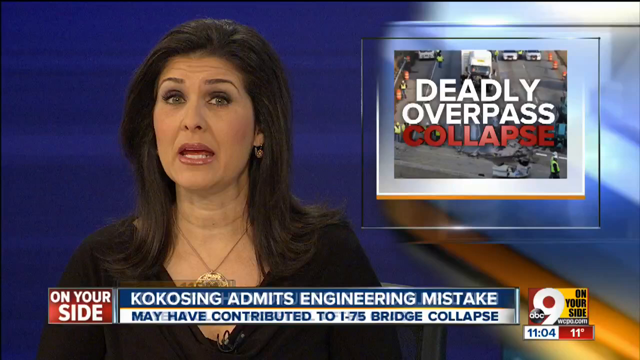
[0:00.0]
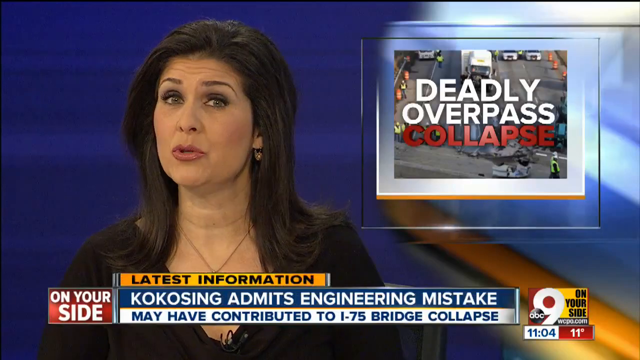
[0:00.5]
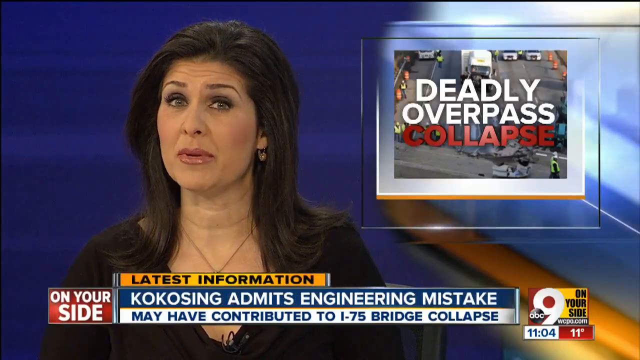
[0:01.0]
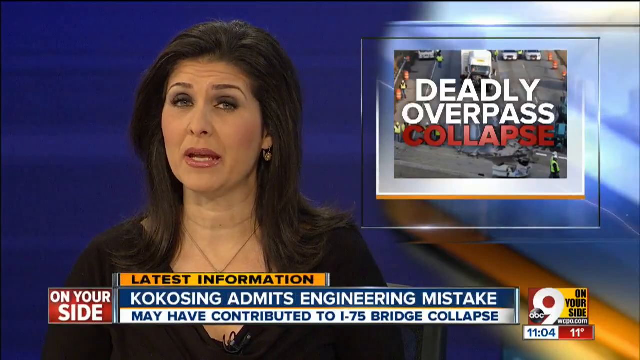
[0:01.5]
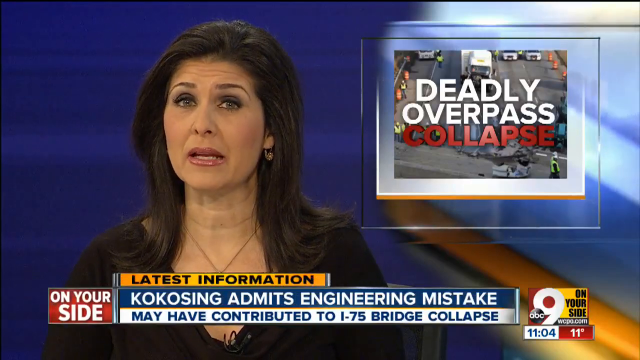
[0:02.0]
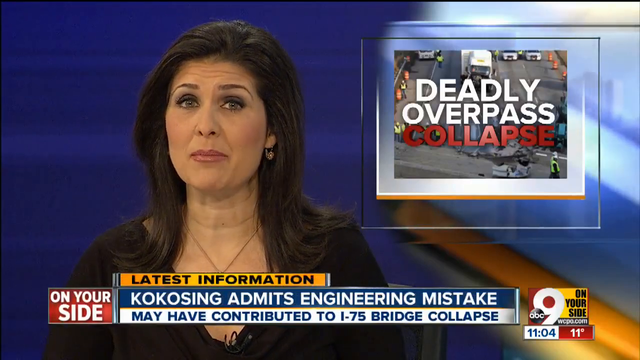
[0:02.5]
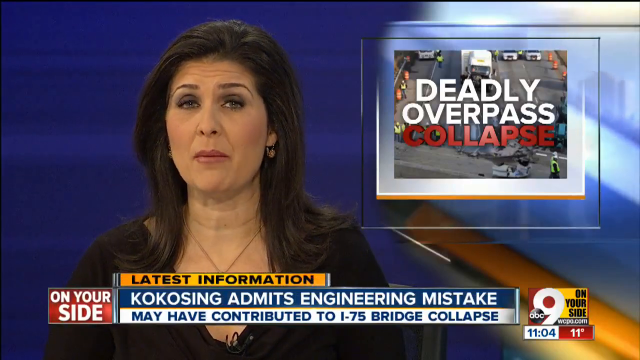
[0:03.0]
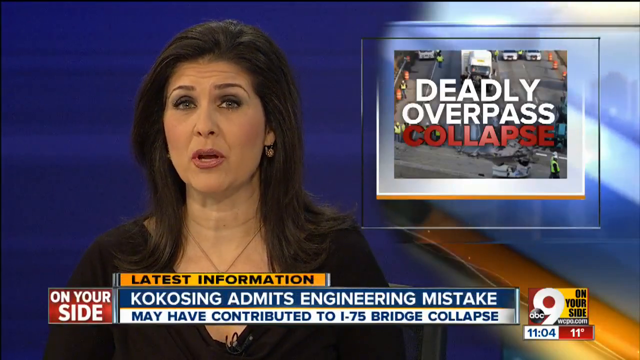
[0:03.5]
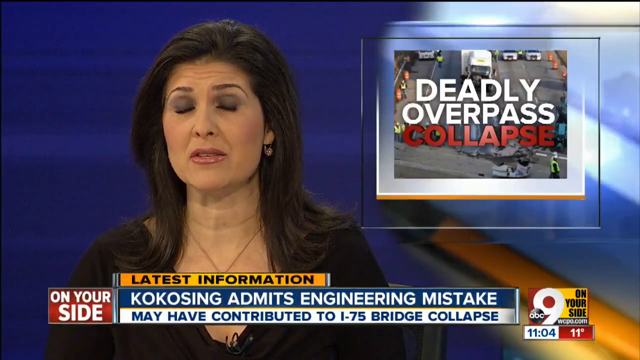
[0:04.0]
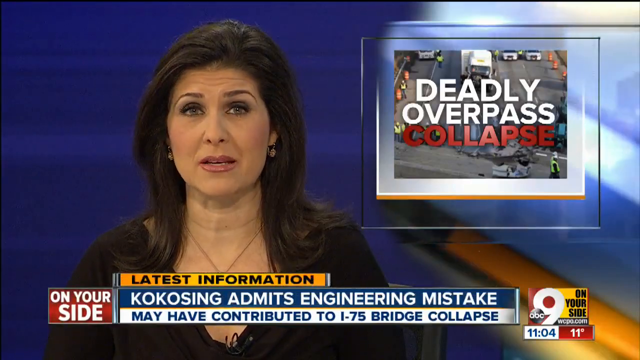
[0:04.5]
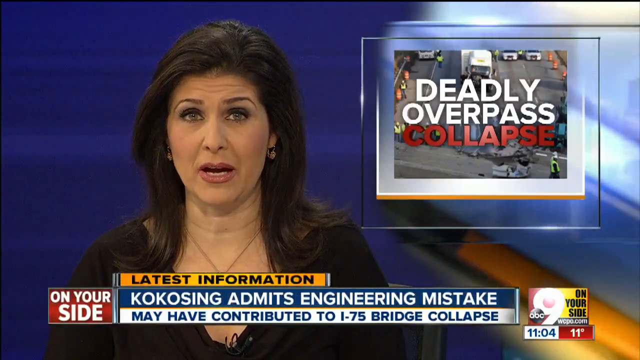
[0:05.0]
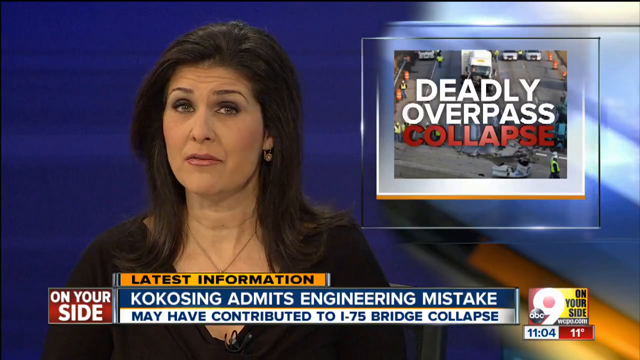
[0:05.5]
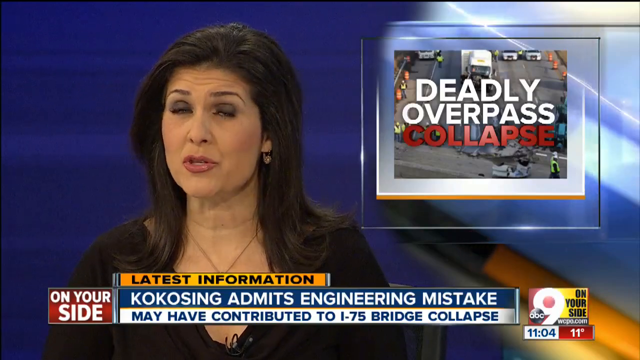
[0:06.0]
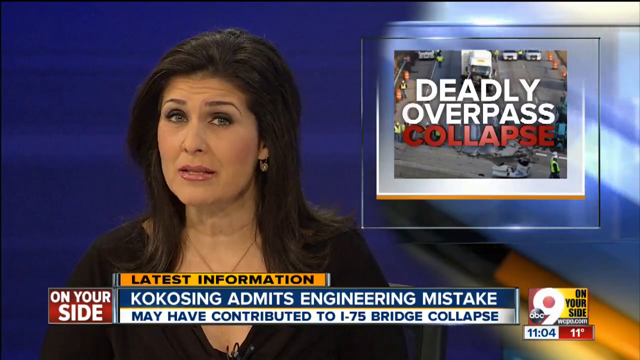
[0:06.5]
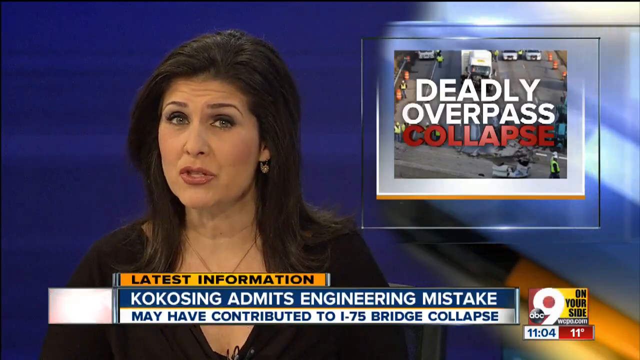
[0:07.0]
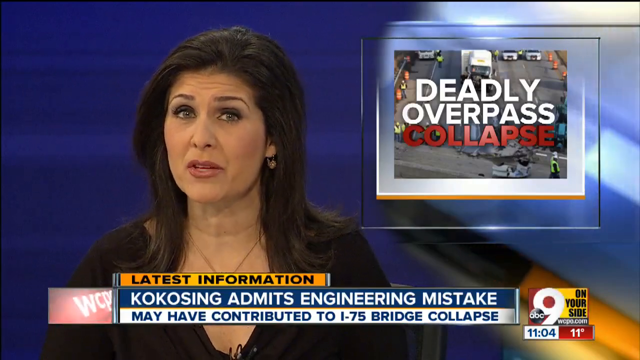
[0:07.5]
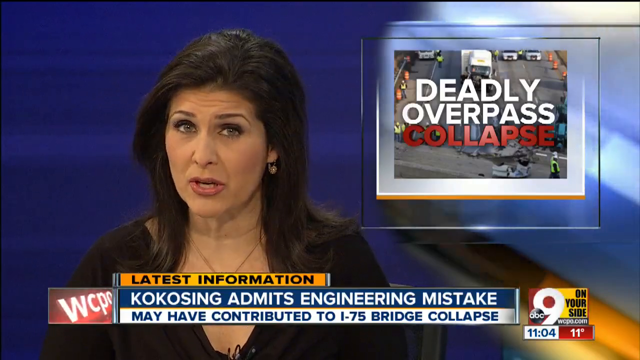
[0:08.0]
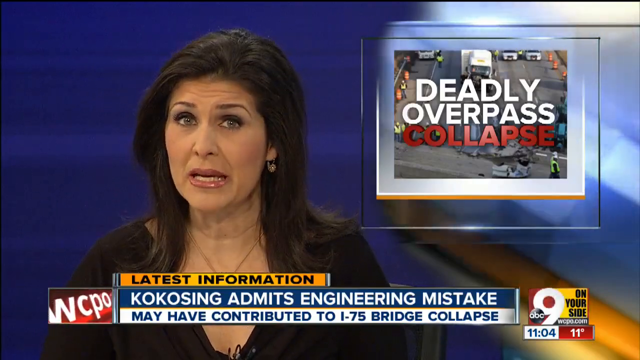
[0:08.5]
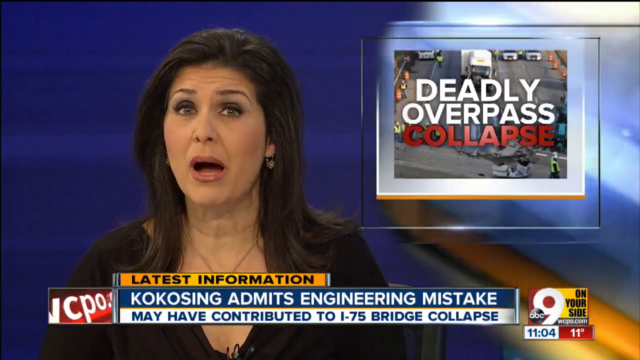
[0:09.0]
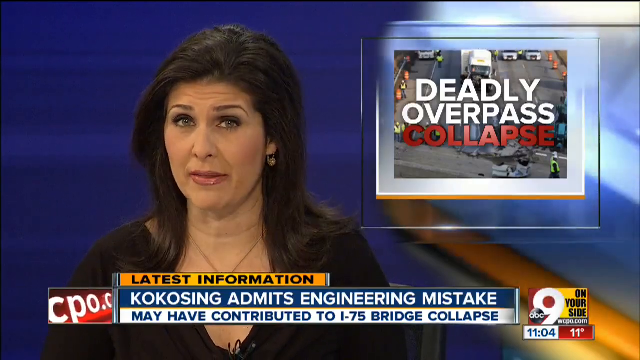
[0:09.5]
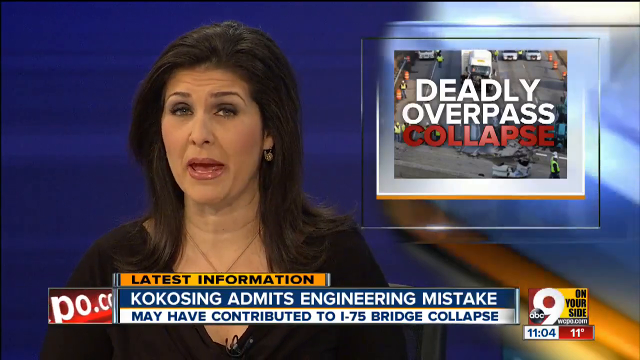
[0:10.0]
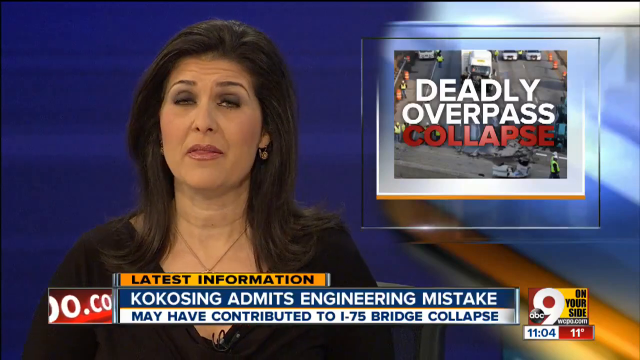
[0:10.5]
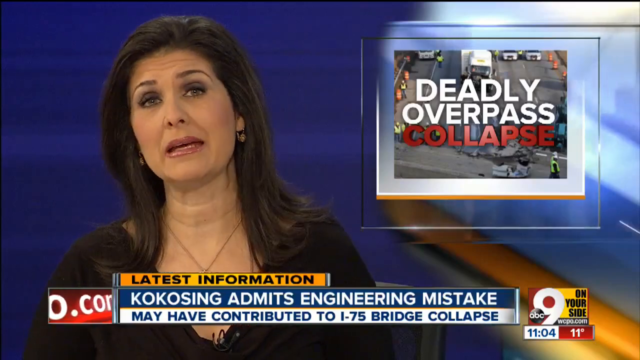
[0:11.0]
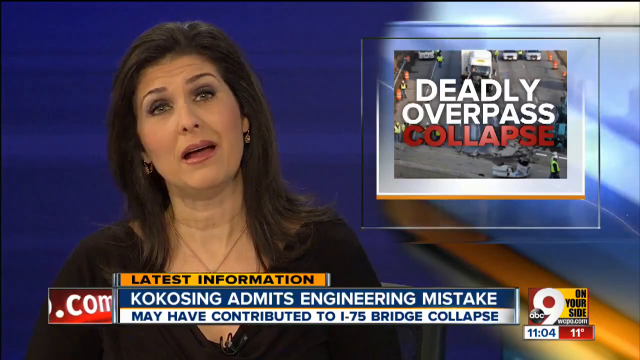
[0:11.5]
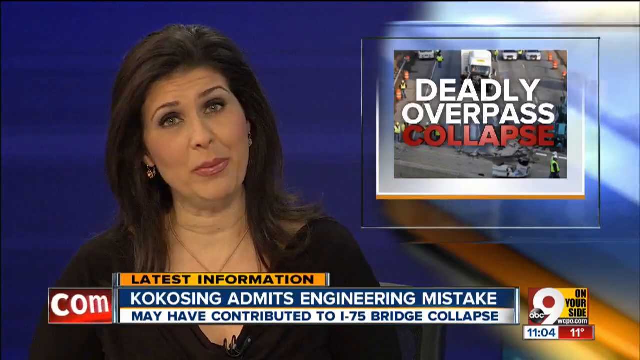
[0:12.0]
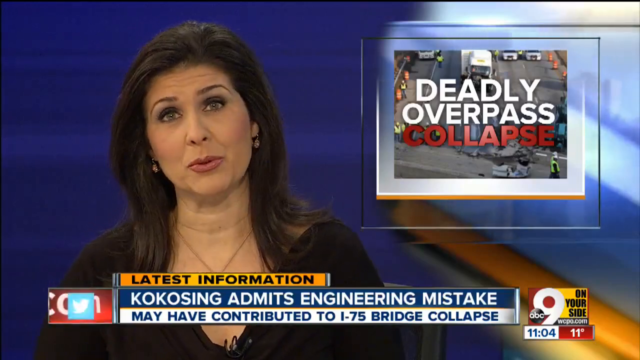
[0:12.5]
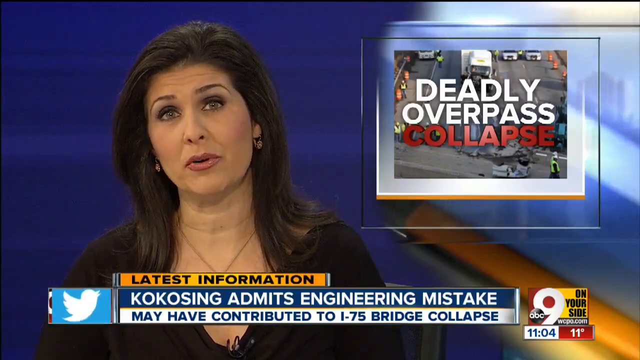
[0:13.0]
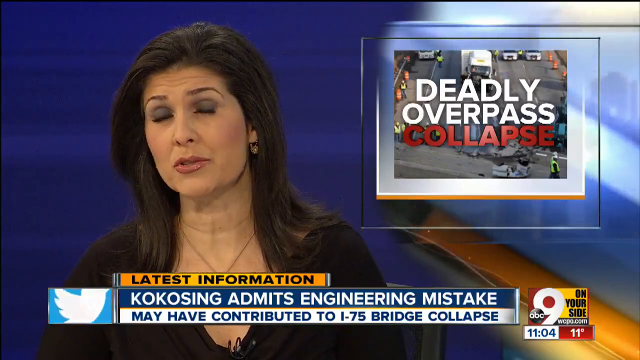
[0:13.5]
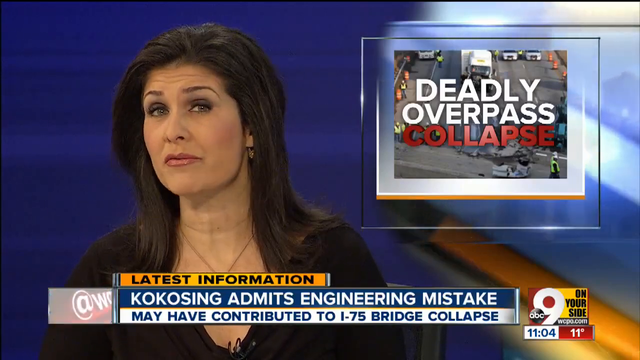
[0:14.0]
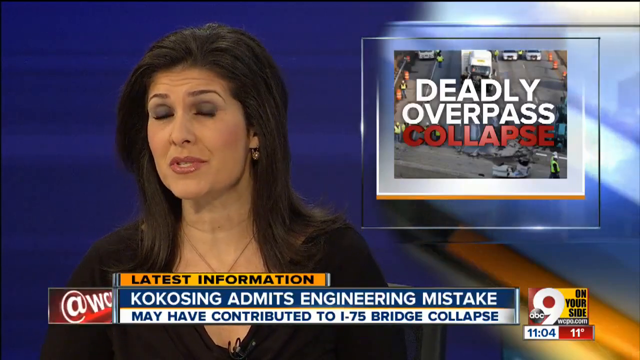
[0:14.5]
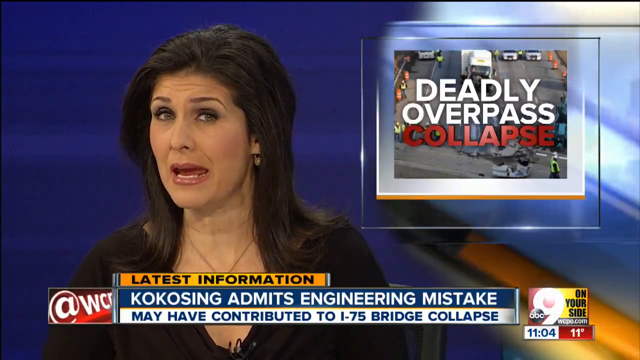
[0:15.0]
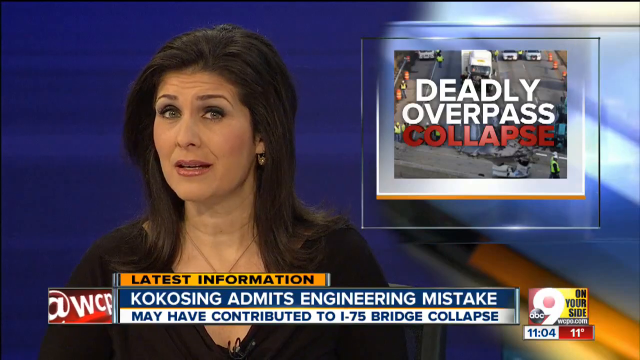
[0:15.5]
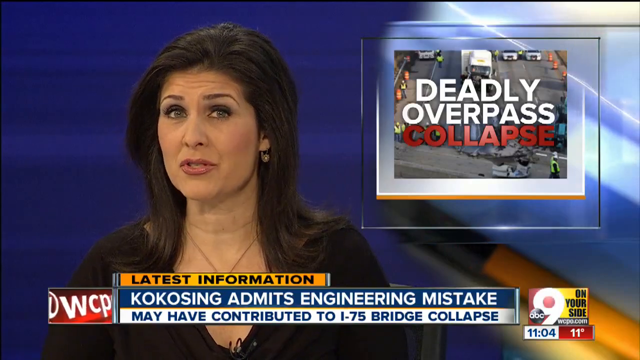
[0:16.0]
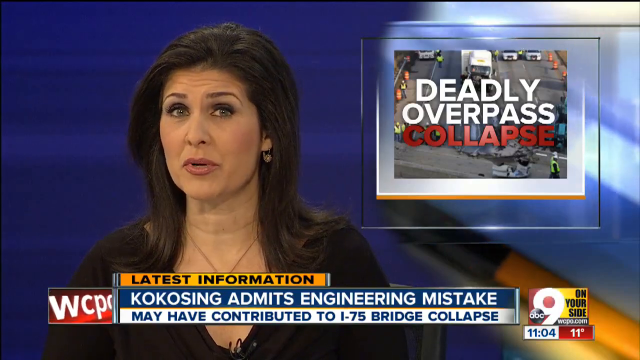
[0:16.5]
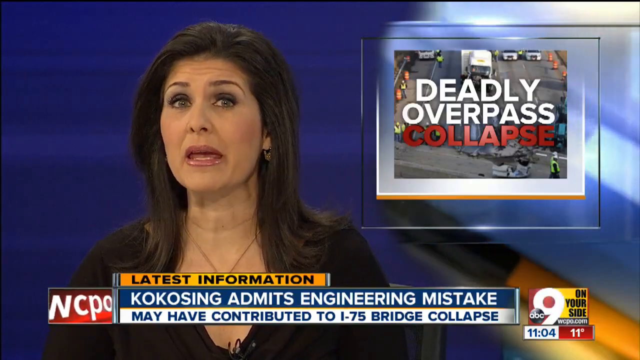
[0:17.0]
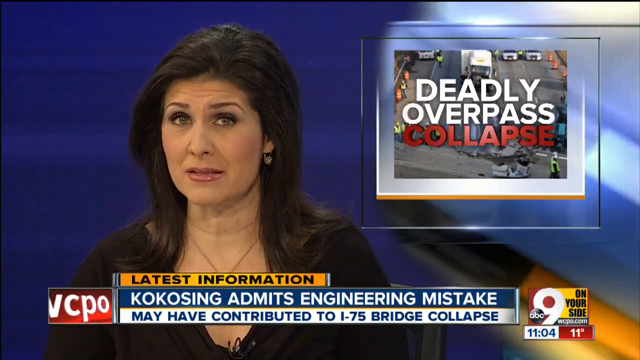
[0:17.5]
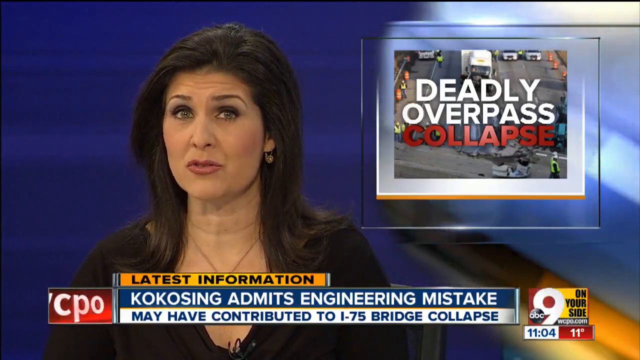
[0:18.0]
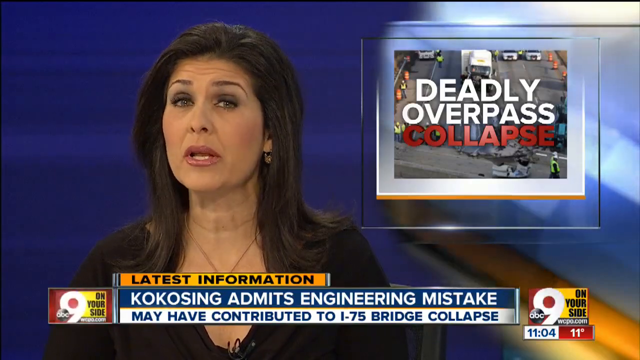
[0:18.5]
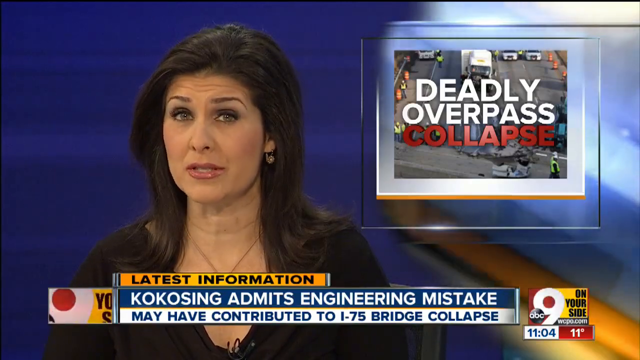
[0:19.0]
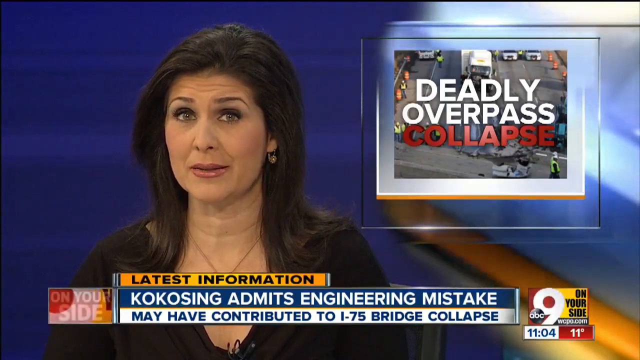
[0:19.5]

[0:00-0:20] A news report about a deadly overpass collapse opens the video. A headline reads "Coco Singh admits engineering mistake," and text says "we may have contributed to the I-75 bridge collapse." A female reporter talks directly into the camera on Channel 9, ABC. Above the journalist is text that says "deadly overpass collapse," along with a picture of a bridge that has fallen in and cars backed up in traffic. The newswoman wears a black sweater, a gold necklace and small hoop earrings. The background is a sort of dark blue color.